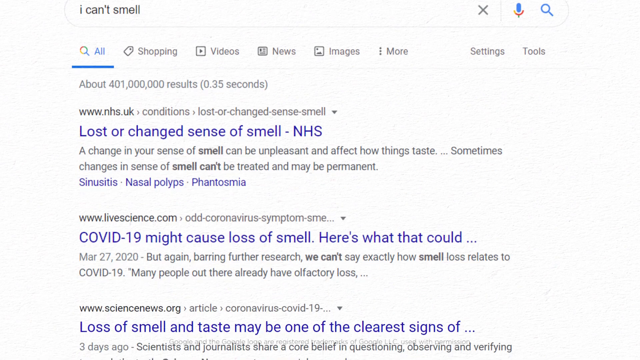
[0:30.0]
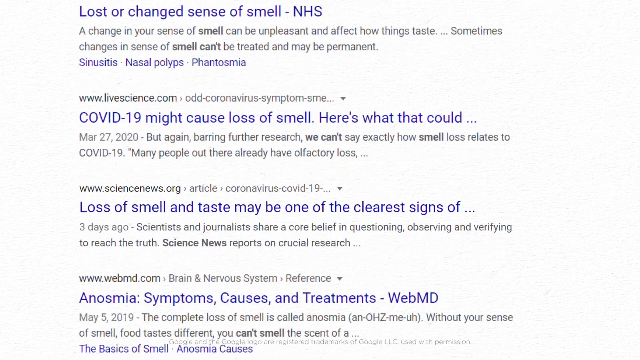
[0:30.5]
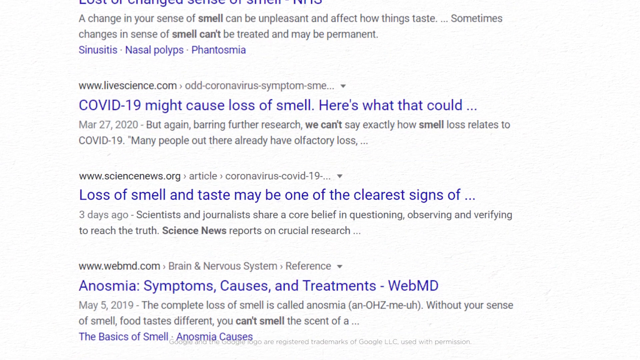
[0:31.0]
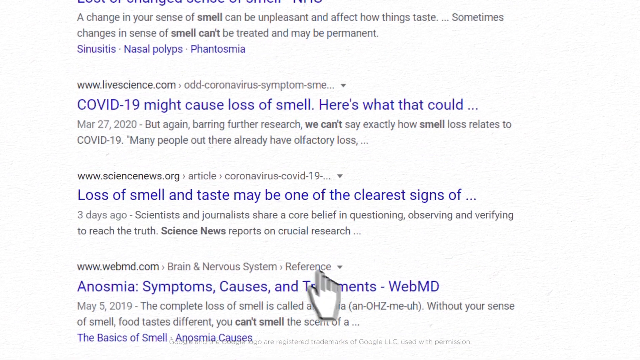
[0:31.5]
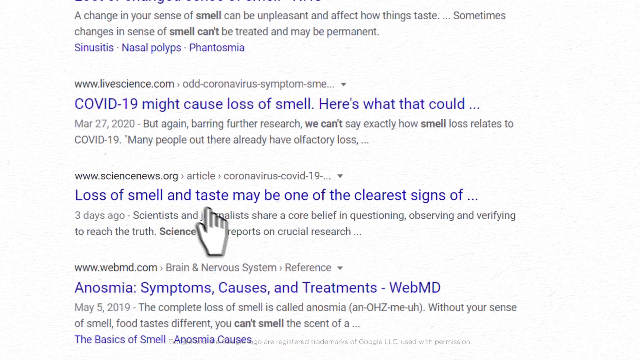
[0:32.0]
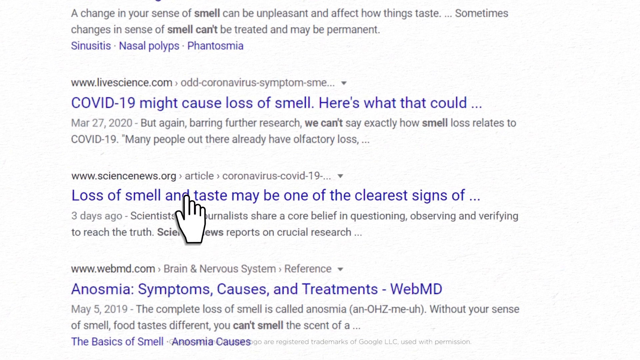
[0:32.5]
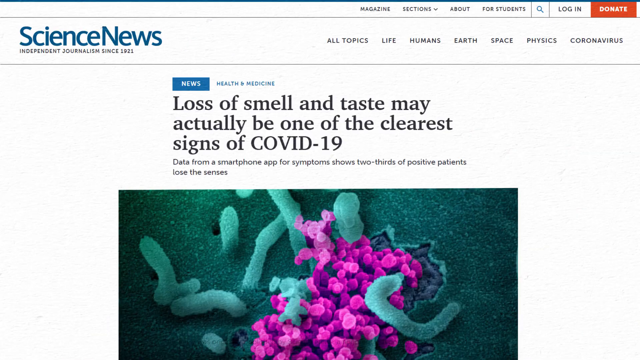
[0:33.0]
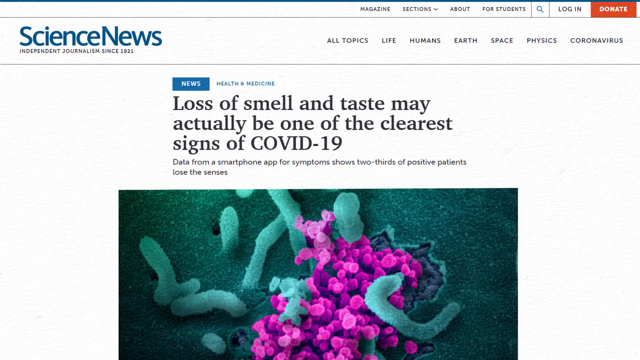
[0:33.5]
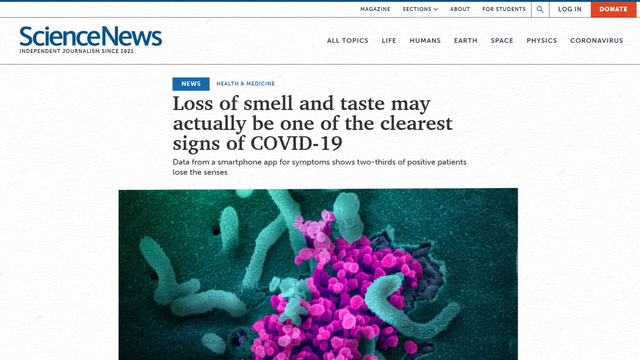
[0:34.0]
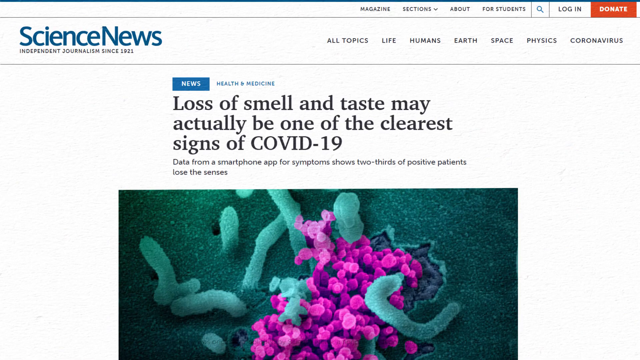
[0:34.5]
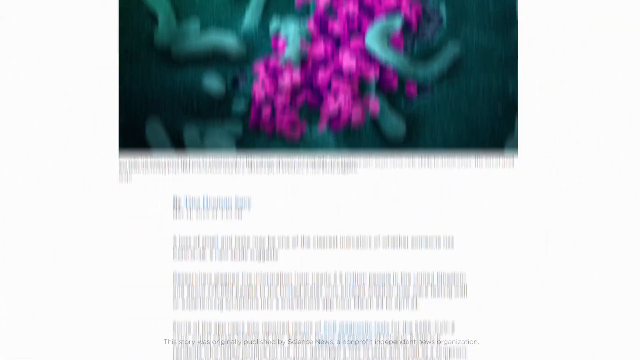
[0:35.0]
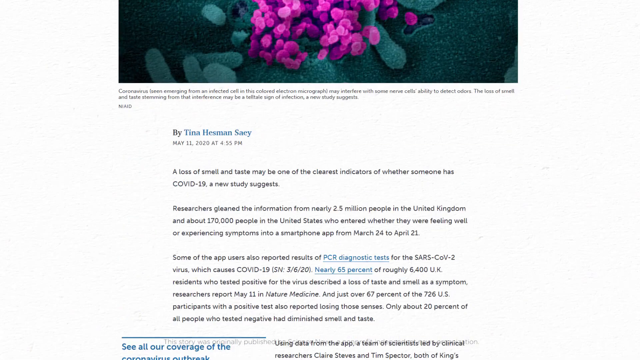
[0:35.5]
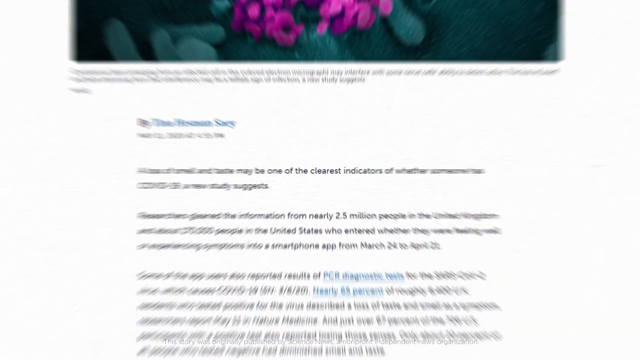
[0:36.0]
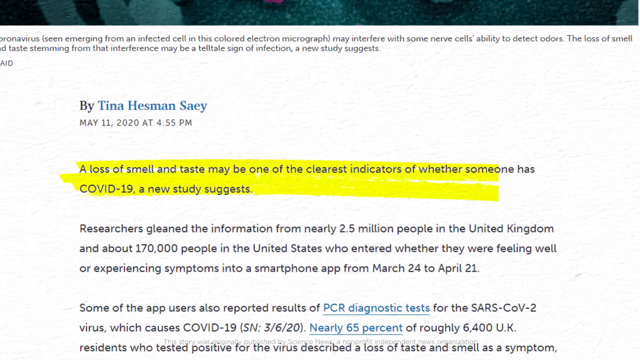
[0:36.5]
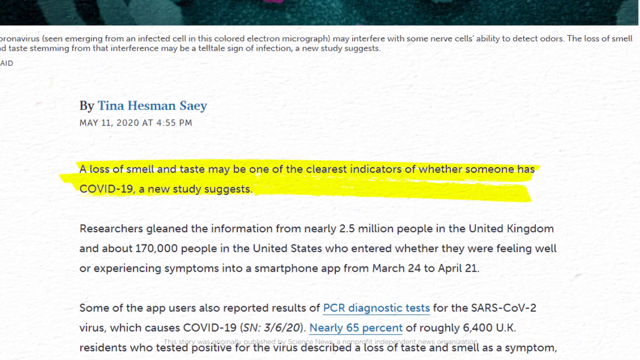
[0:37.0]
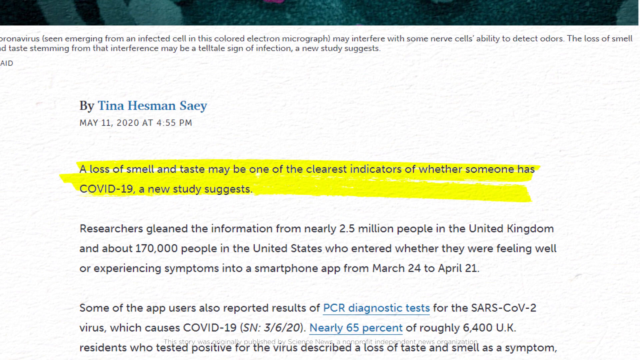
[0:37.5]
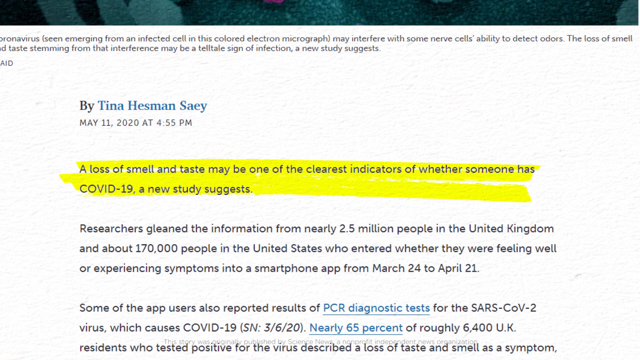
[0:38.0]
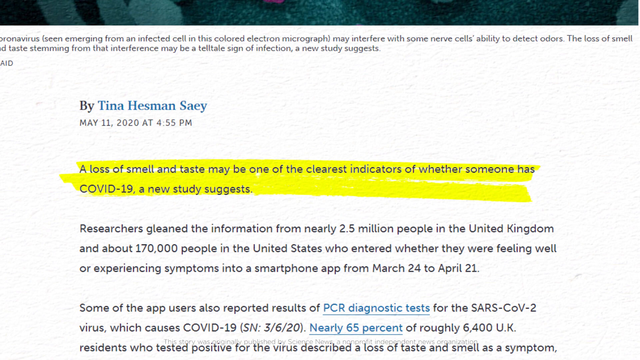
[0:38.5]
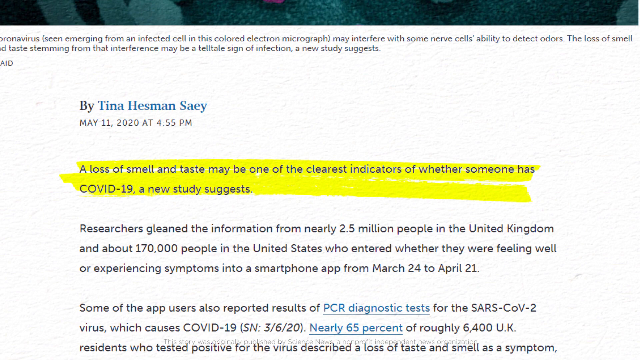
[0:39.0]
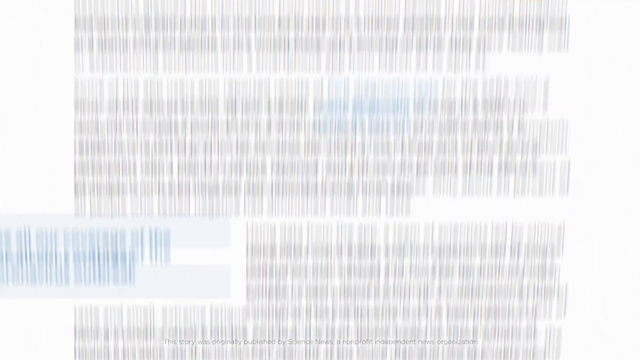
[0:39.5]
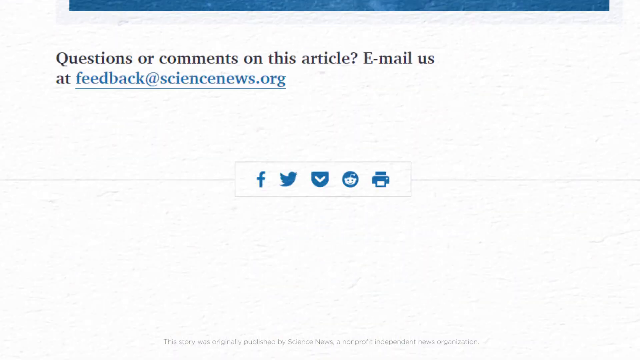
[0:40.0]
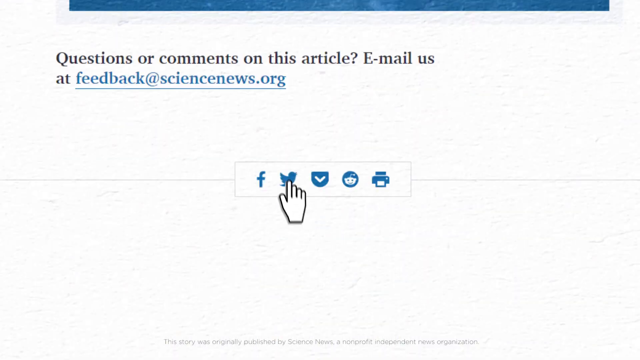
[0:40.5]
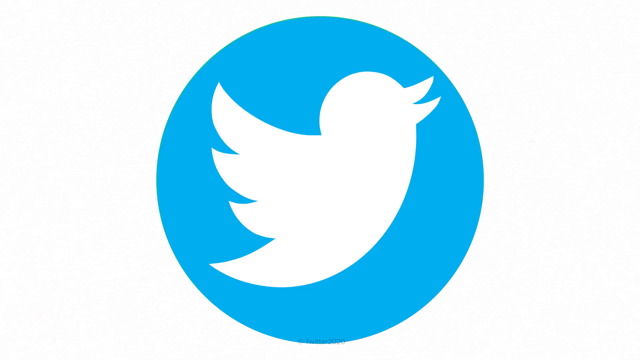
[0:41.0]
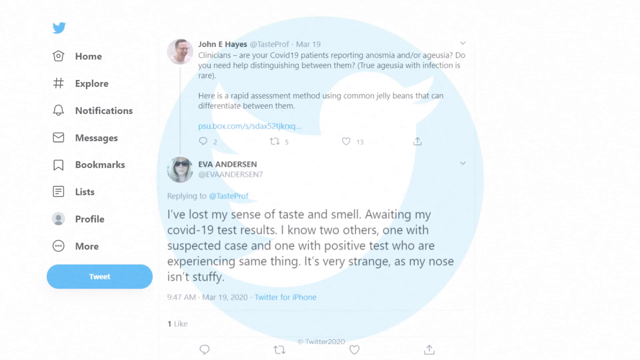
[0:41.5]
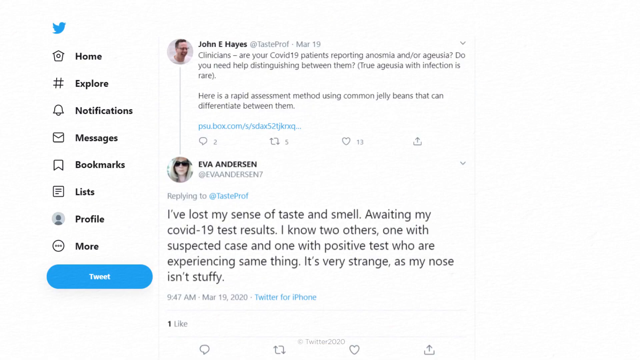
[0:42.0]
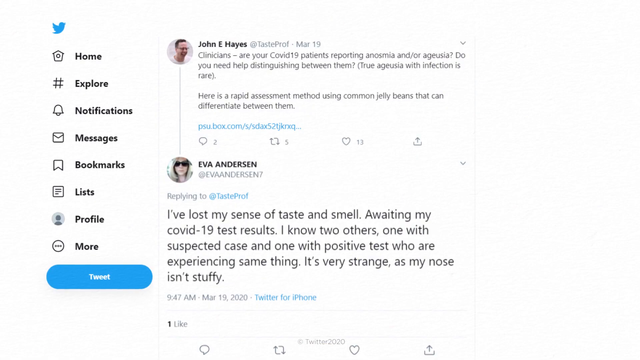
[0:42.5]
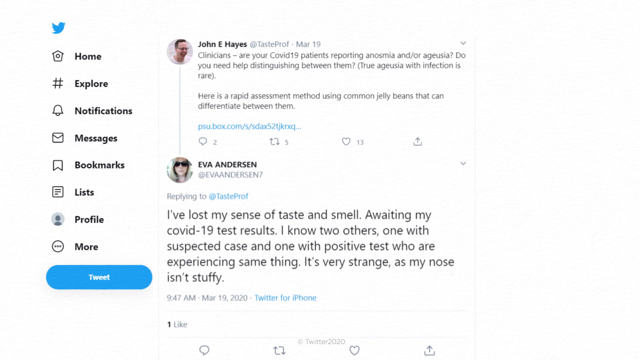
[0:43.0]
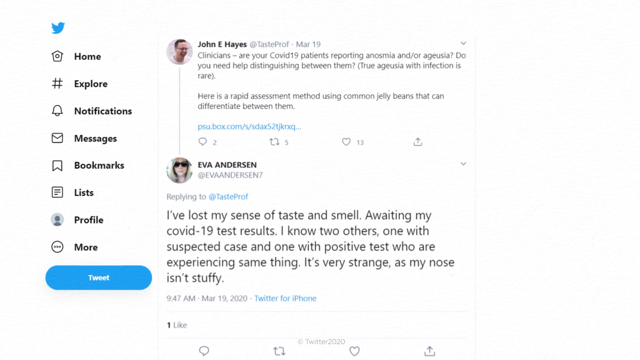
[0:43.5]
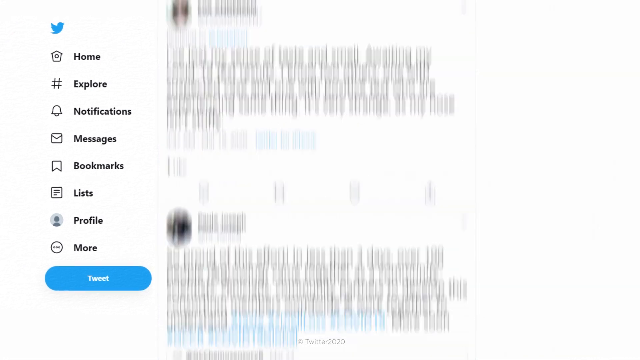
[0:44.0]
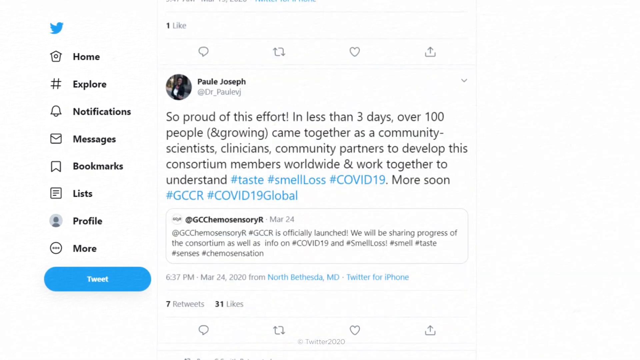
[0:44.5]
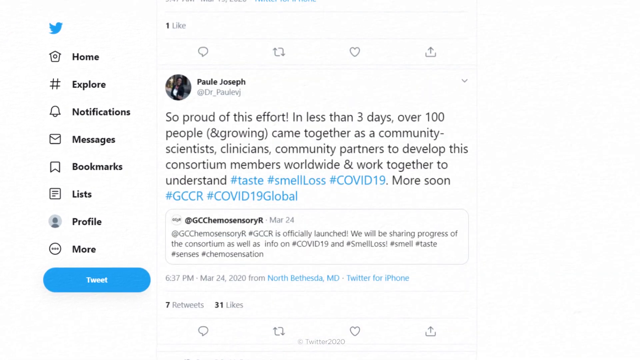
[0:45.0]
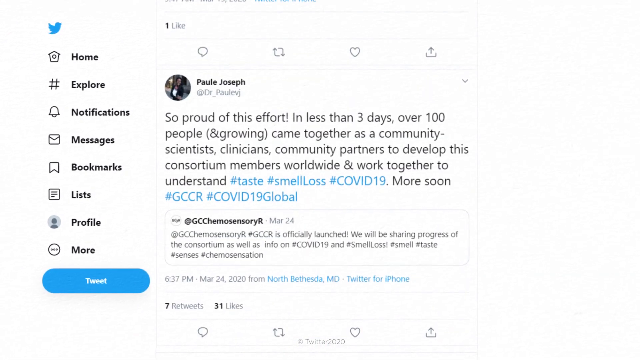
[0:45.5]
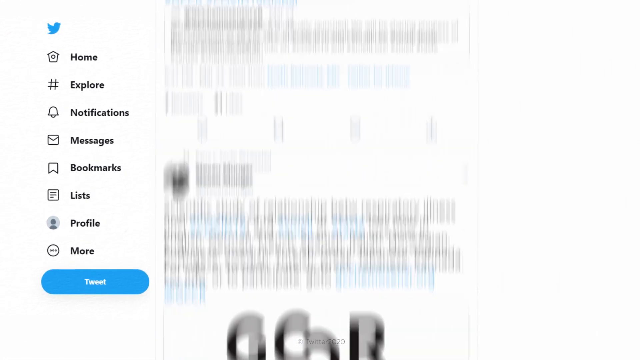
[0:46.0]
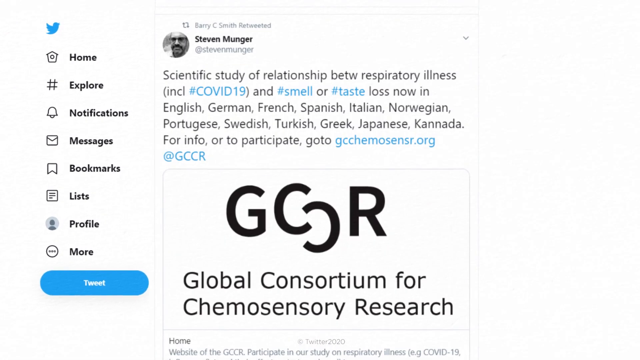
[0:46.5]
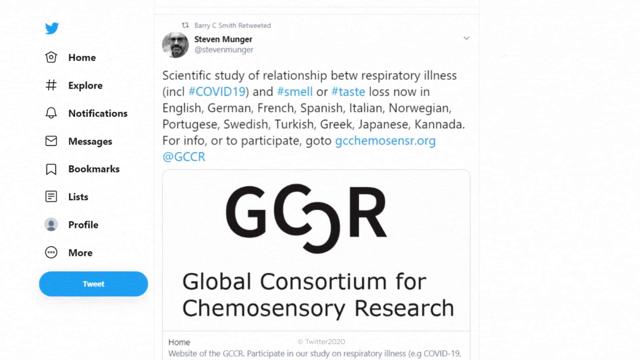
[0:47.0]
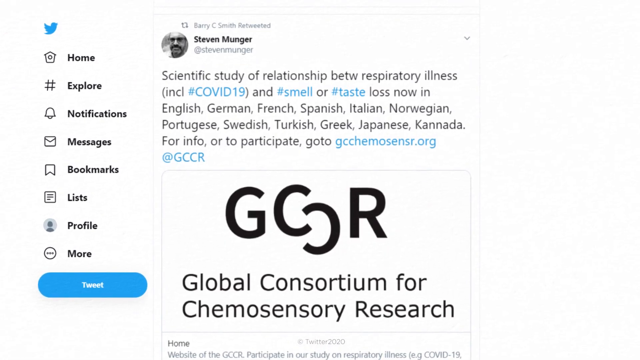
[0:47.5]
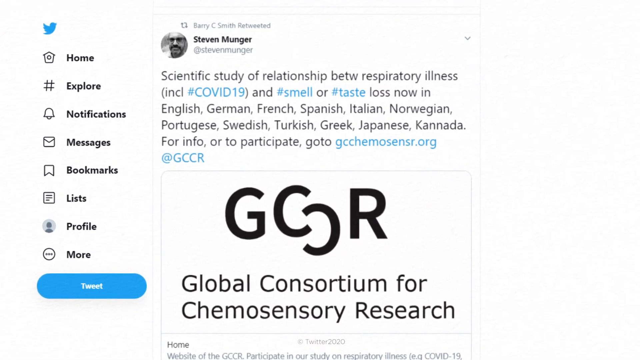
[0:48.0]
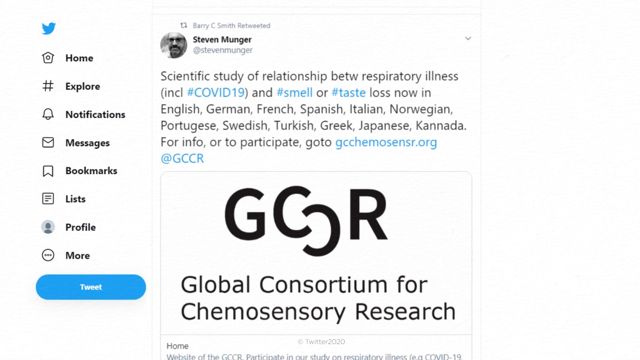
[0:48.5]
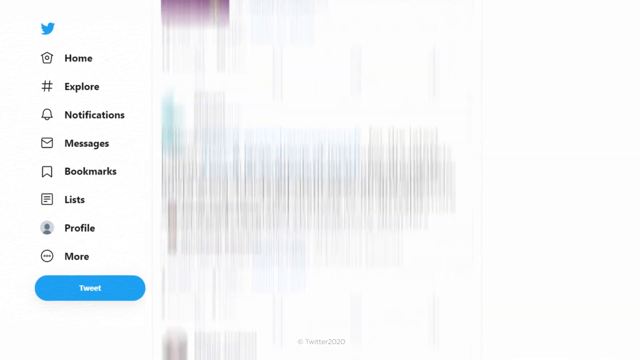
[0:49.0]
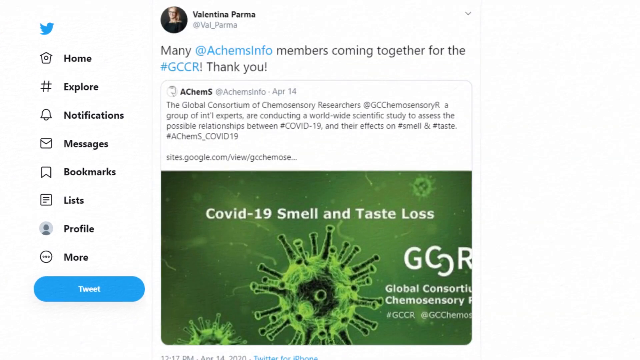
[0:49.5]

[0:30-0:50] A Google search page displays several results. The first reads "www.livescience.com" with "COVID-19 might cause loss of smell. Here's what that could..." beneath it. Next is "www.sciencenews.org" with "loss of smell and taste may be one of the clearest signs of..." beneath it, and a small hand pointer hovers over this one. Below that is "www.webmd.com" with "anosmia, symptoms, causes, and treatments. WebMD." The hand clicks the middle result, and a website opens with "Science News" in the top left and the headline "loss of smell and taste may actually be one of the clearest signs of COVID-19" at the top middle. The page scrolls down to a green picture under the headline showing strings of bacteria and viruses through a microscope. An article on the page is highlighted in yellow and reads "a loss of smell and taste may be one of the clearest indicators of whether someone has COVID-19, a new study suggests." The page scrolls to the bottom, a blue circle with a bird in it is pressed, and a post pops up reading "I've lost my sense of taste and smell awaiting my COVID-19 results I know two others one with suspected case and one with positive tests who are experiencing same thing it's very strange as my nose isn't stuffy." The post is by someone named Eva Anderson, with a small circle containing her picture above it.